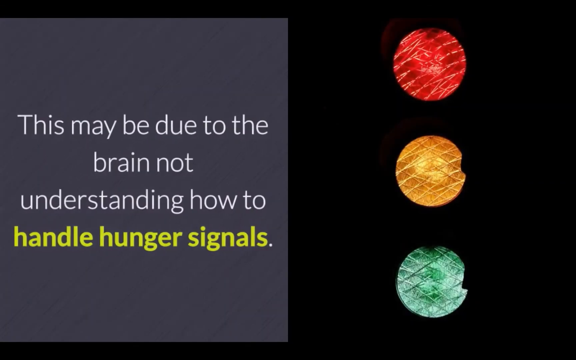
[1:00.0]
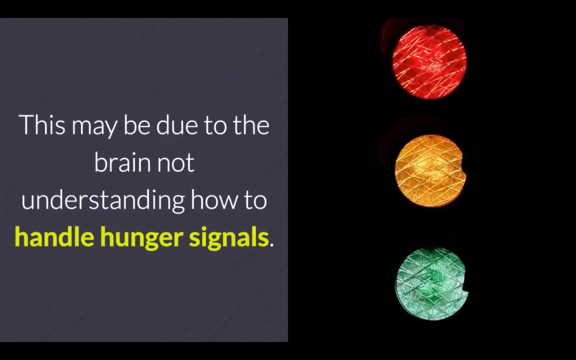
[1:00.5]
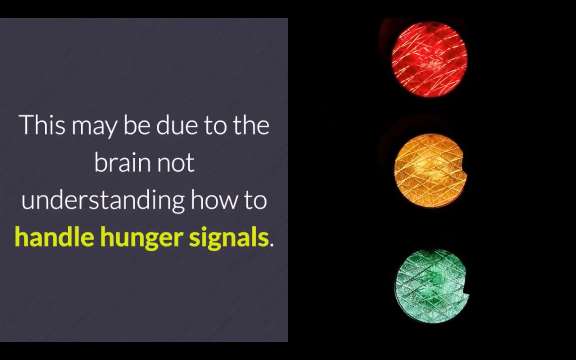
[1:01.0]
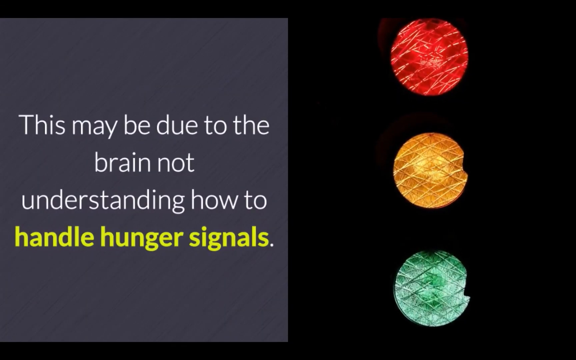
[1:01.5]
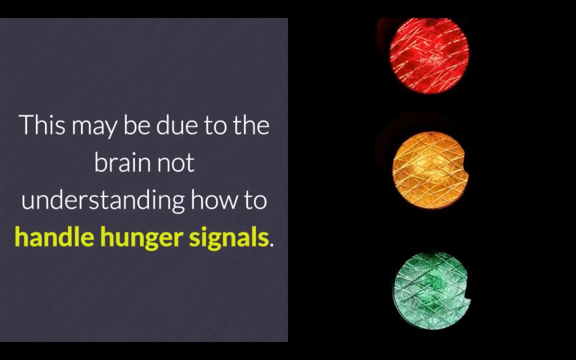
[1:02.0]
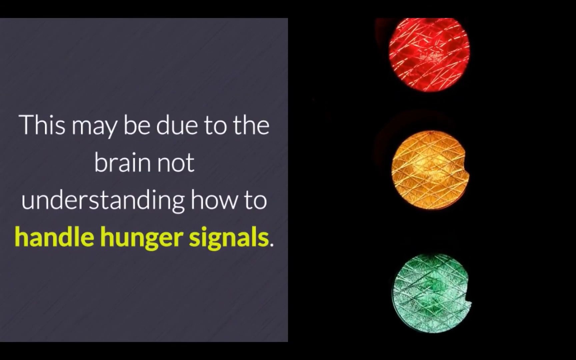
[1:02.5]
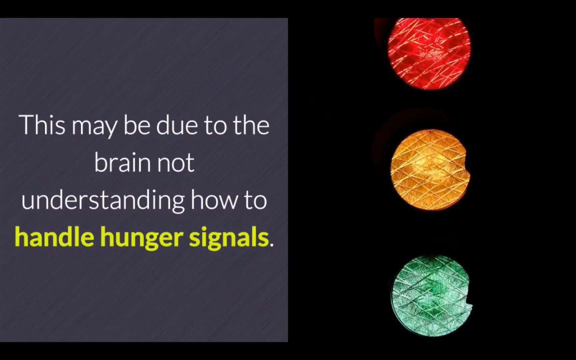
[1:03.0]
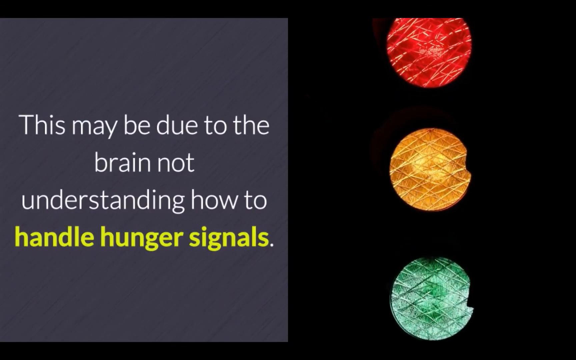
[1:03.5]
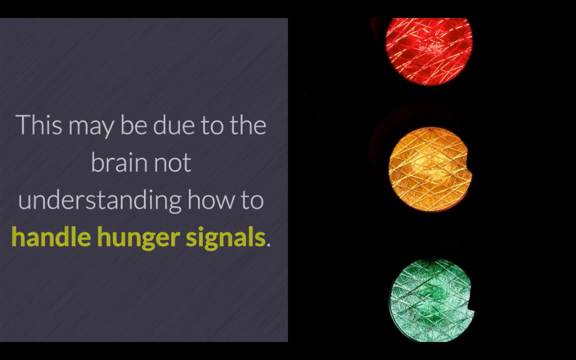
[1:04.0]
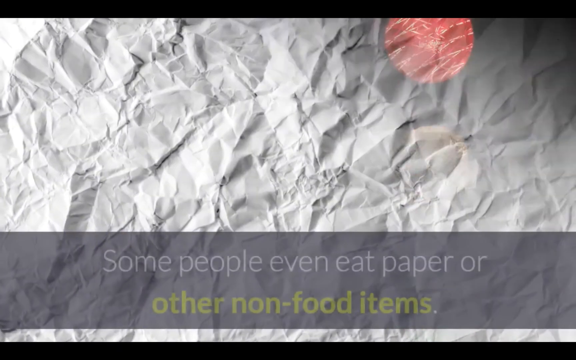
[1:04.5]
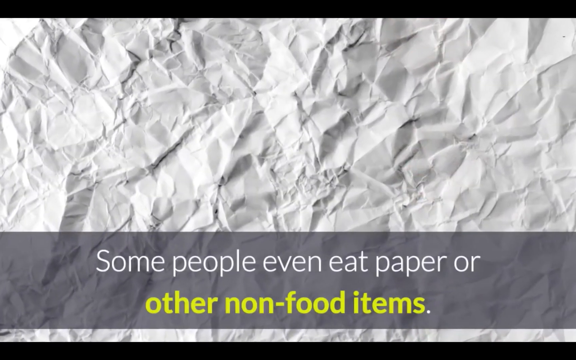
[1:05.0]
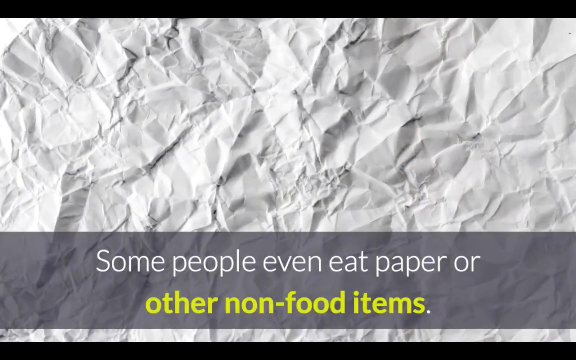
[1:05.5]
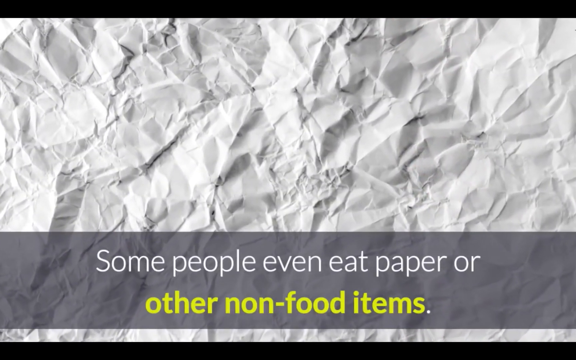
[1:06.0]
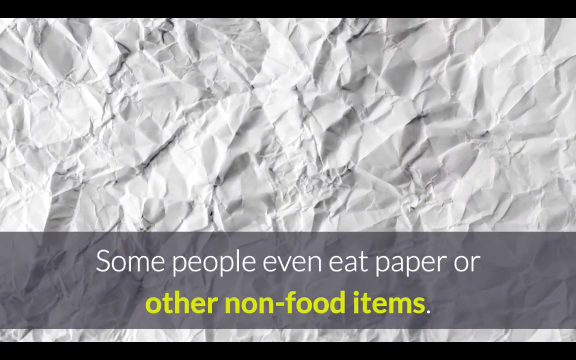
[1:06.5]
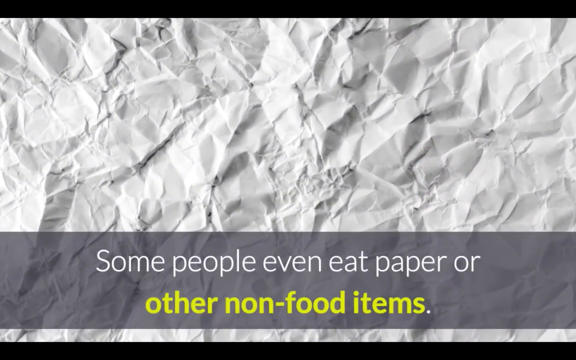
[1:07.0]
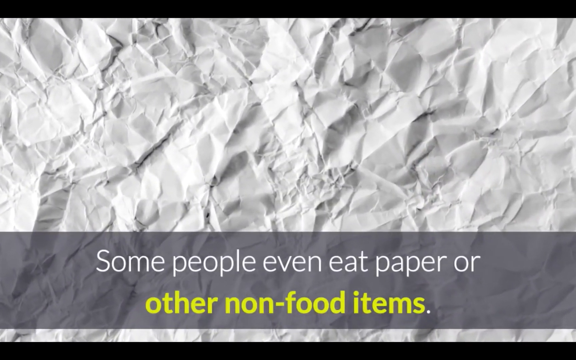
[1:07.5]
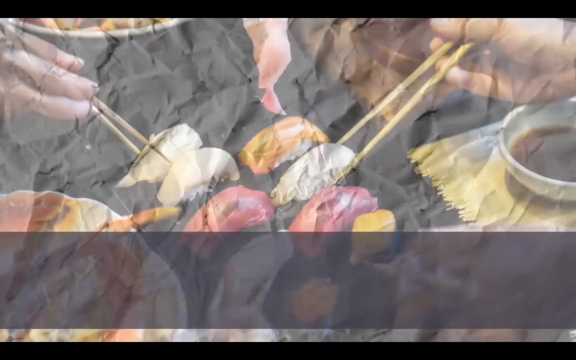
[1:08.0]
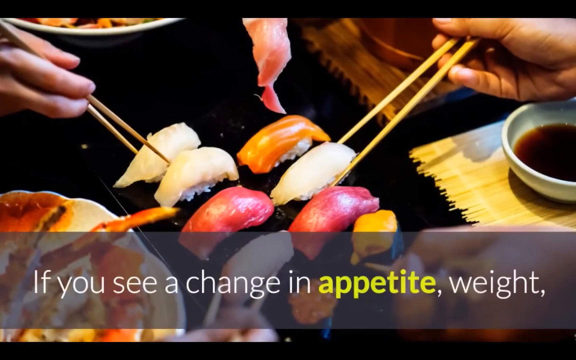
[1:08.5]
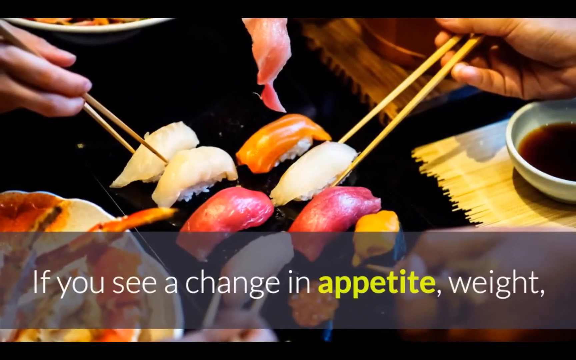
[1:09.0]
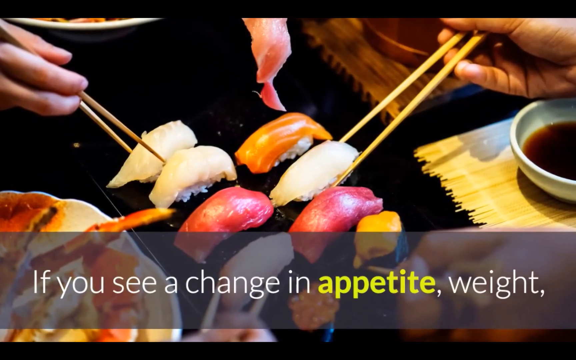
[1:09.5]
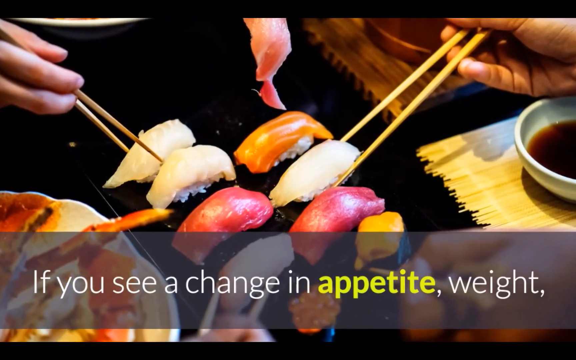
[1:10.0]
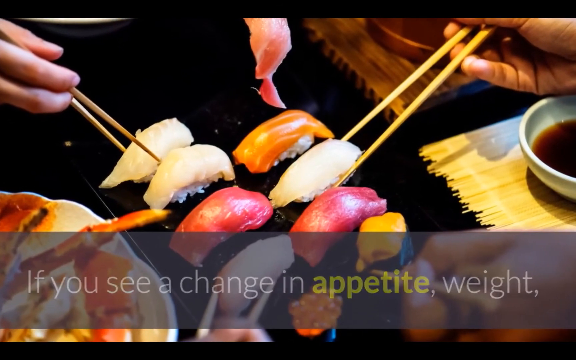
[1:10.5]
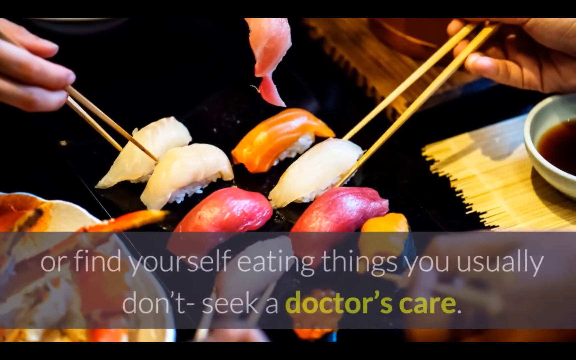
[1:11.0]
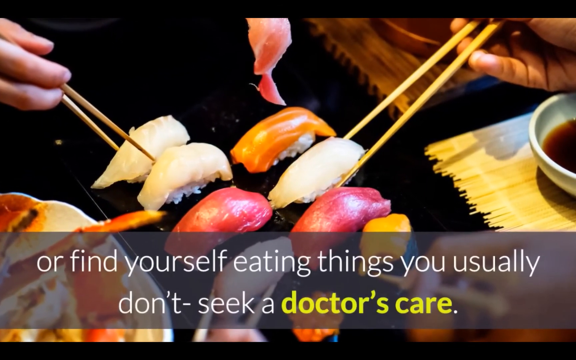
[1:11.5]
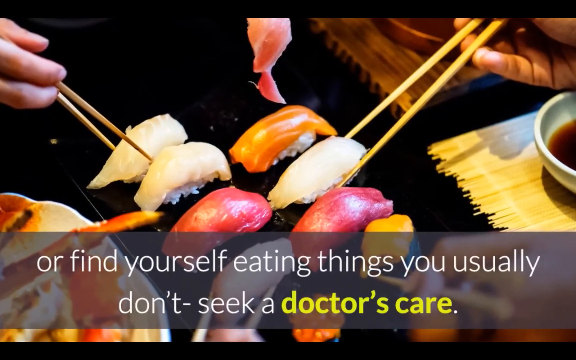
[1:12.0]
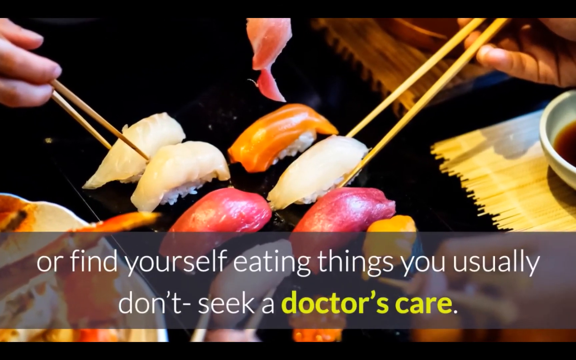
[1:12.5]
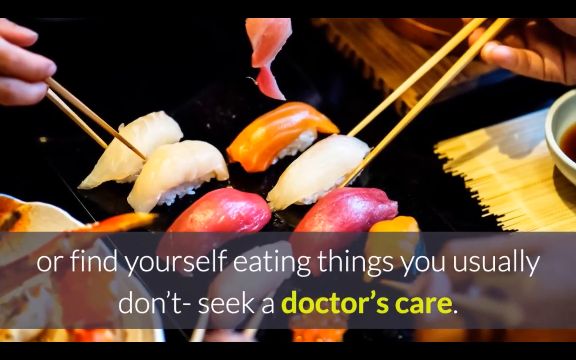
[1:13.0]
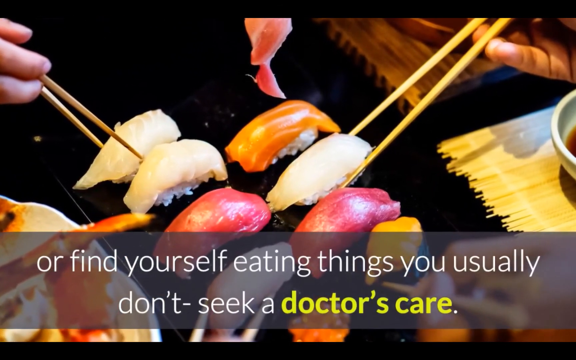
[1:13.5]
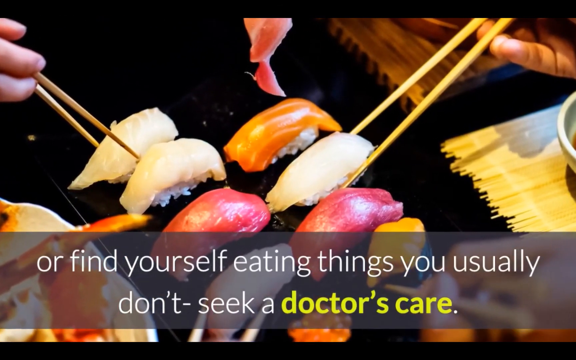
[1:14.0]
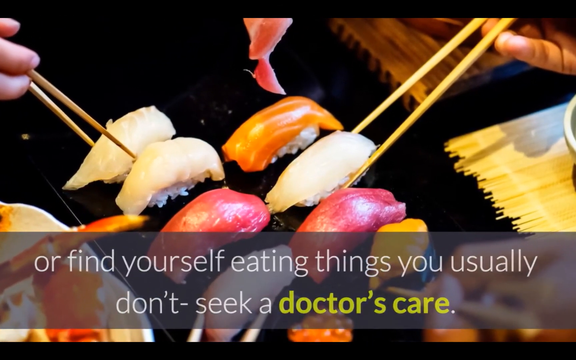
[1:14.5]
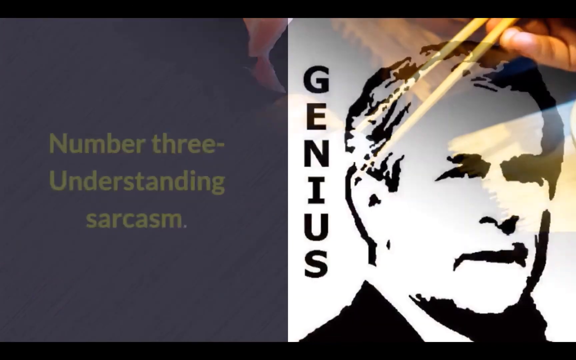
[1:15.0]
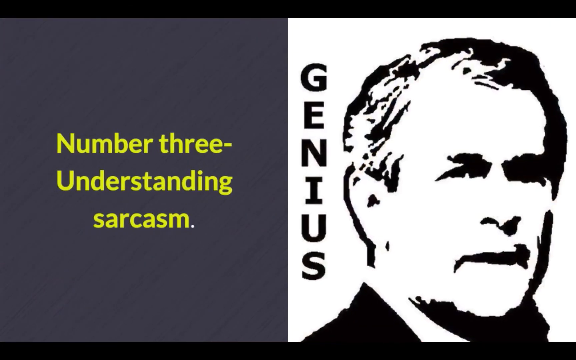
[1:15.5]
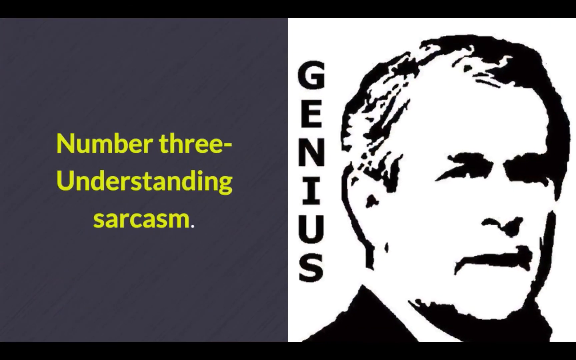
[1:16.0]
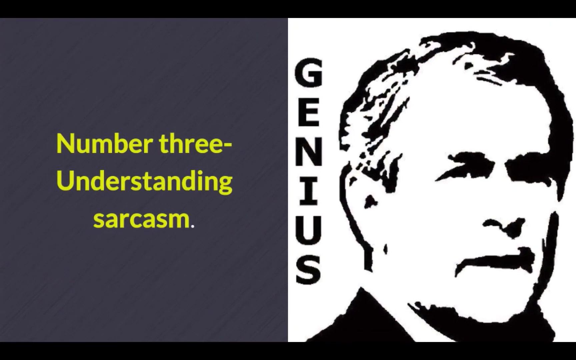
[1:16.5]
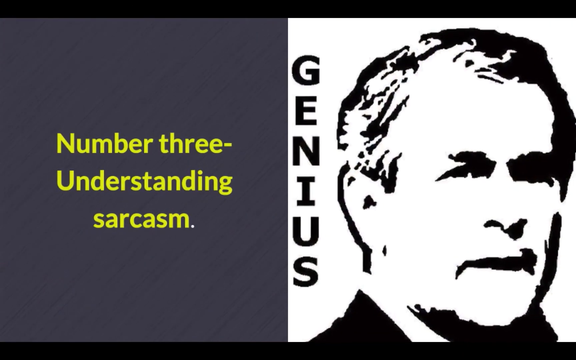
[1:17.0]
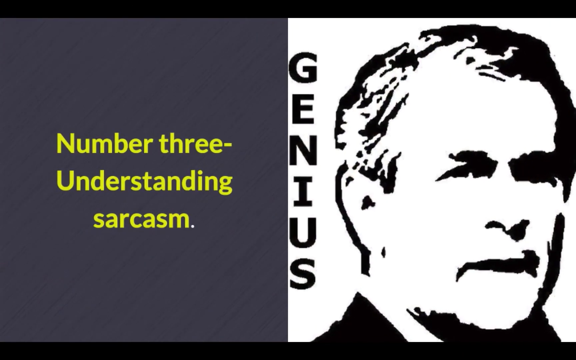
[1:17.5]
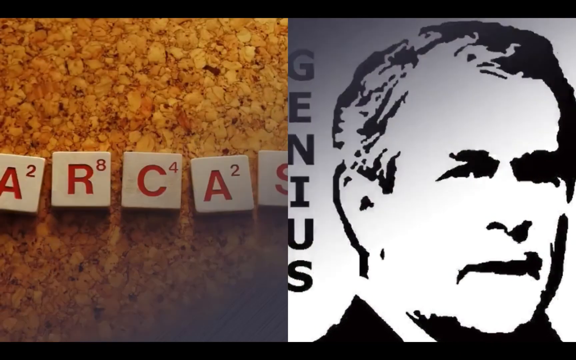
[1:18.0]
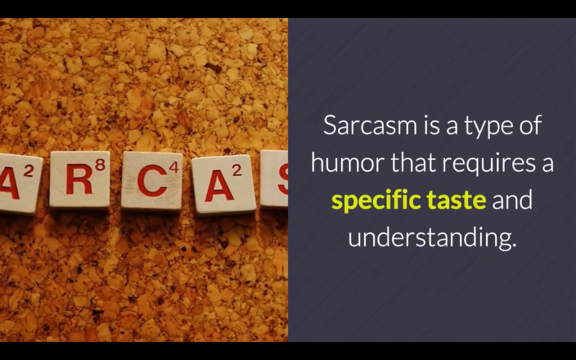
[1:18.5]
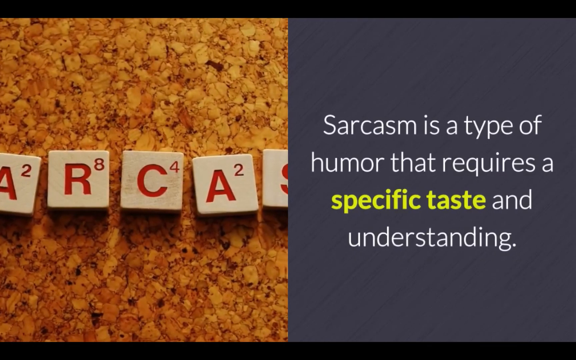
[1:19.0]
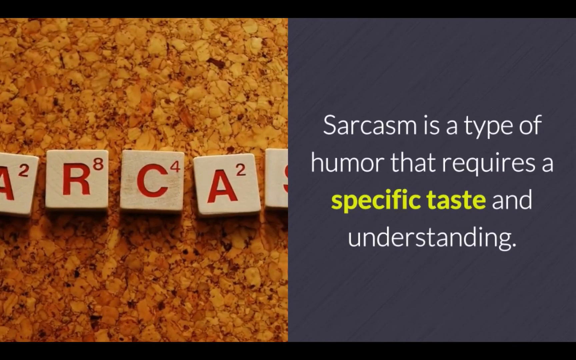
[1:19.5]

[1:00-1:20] One column is half purple, with words written in yellow and white. On the other side are three circles colored red, yellow and green. A paper that looks crumpled appears. Two hands hold seafood with sticks over a black table that has tea and other sweet food. The scene changes to a purple and white page with a man who looks like he has drowned, with the word "genius" written in black beside him. White cubes appear, each with one letter, showing "ARCAS," and beside the cubes is a purple column with white and yellow words.